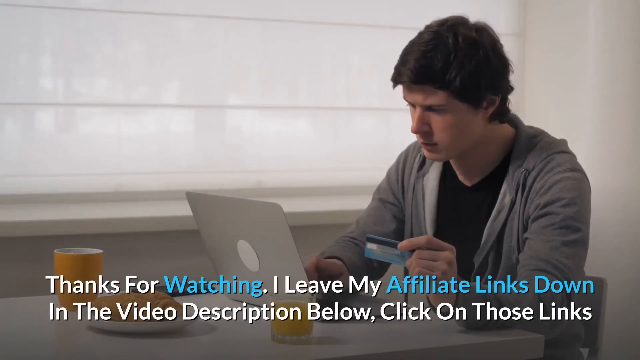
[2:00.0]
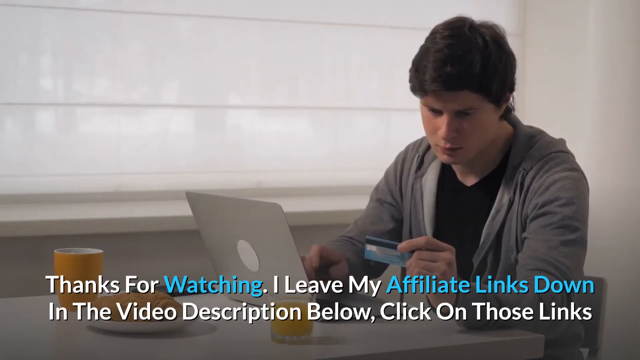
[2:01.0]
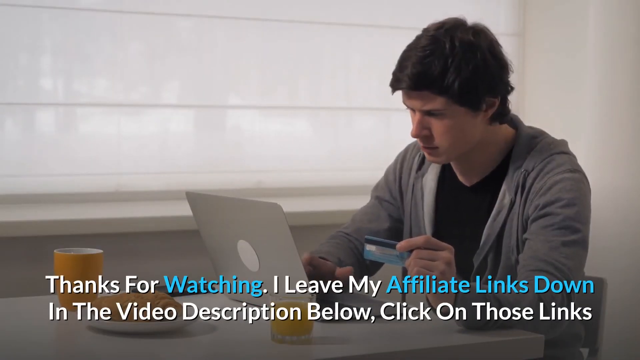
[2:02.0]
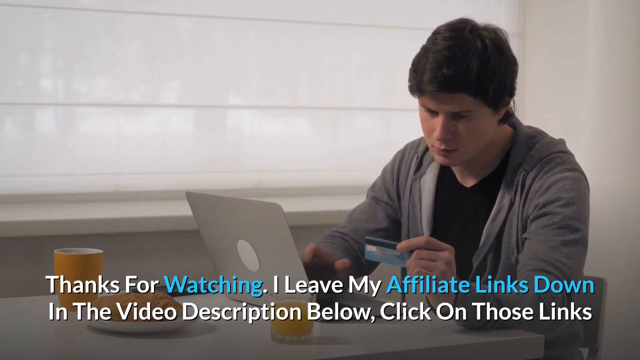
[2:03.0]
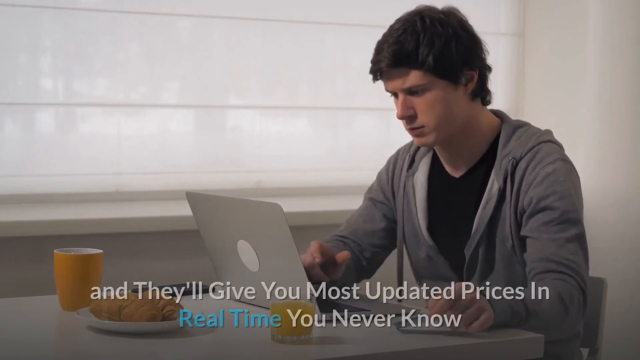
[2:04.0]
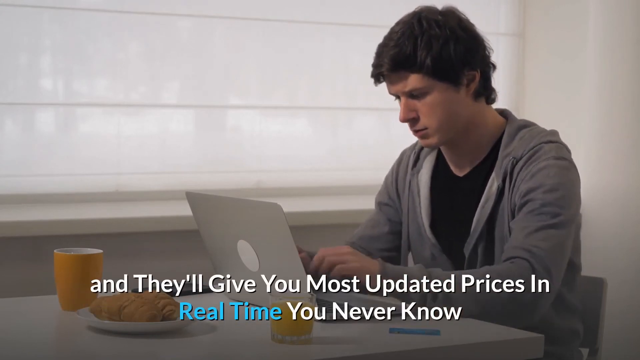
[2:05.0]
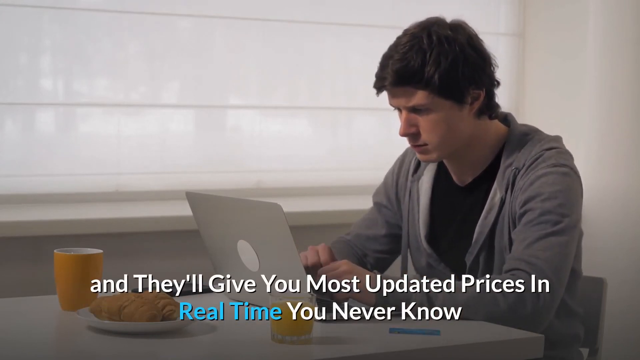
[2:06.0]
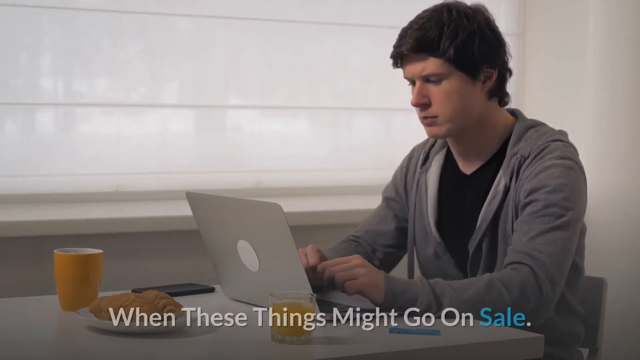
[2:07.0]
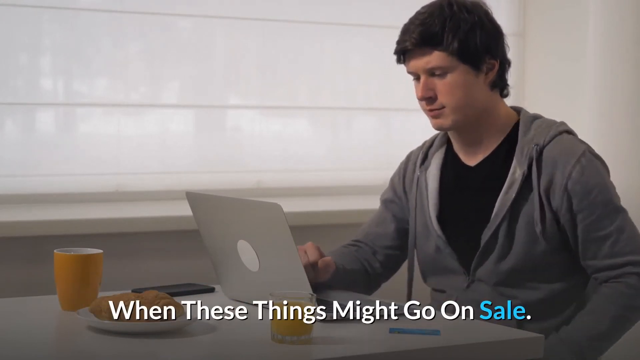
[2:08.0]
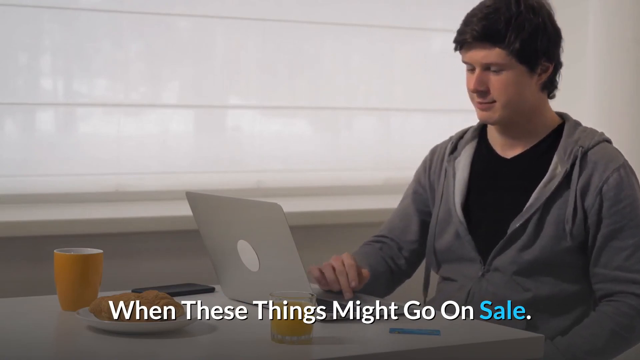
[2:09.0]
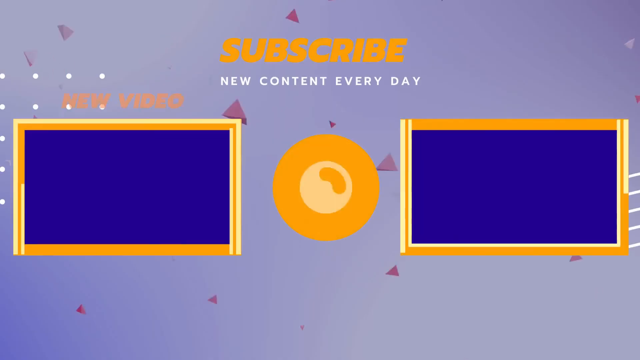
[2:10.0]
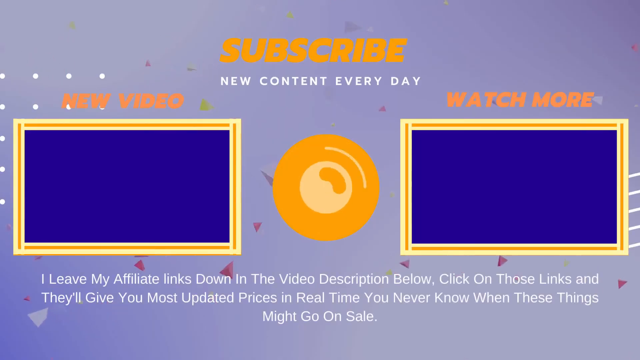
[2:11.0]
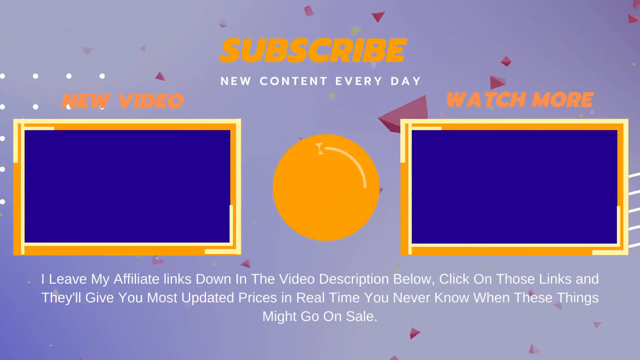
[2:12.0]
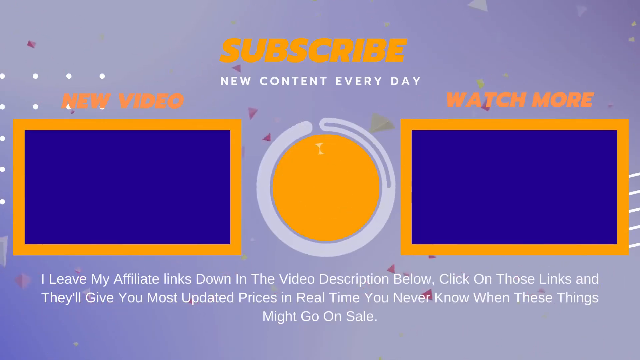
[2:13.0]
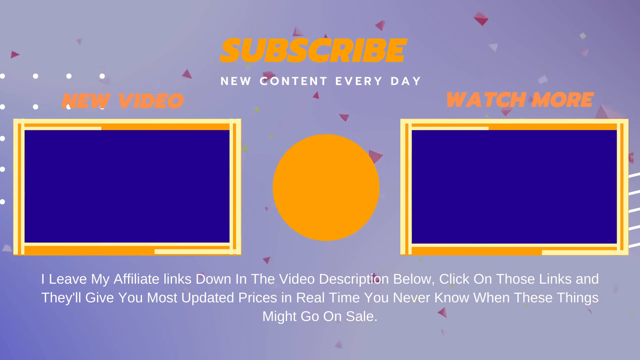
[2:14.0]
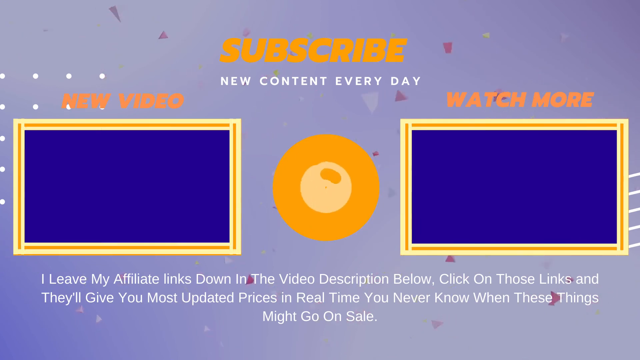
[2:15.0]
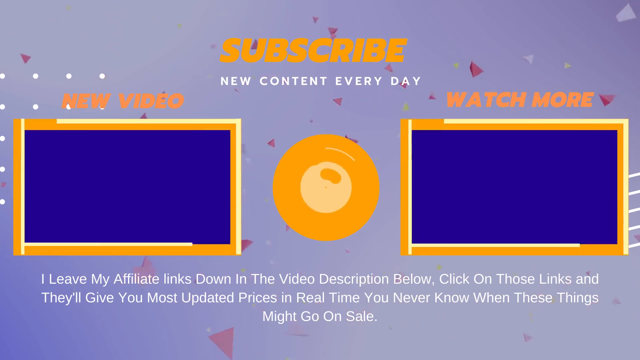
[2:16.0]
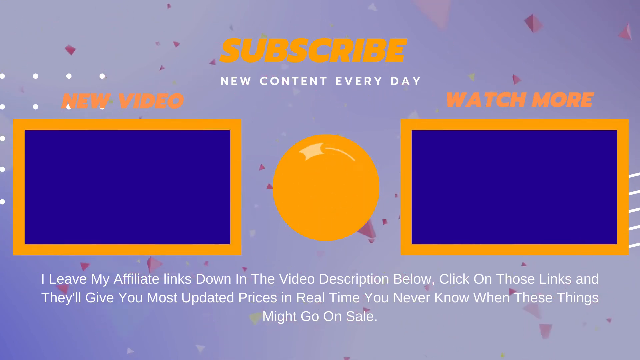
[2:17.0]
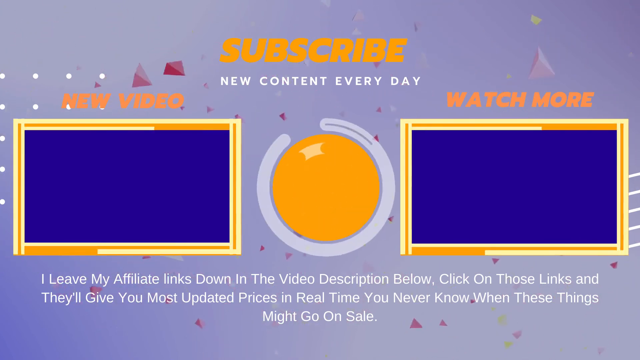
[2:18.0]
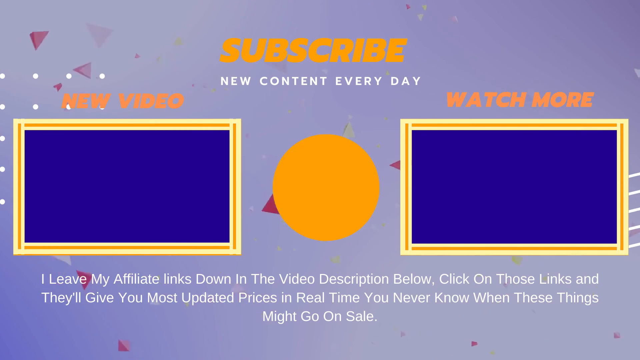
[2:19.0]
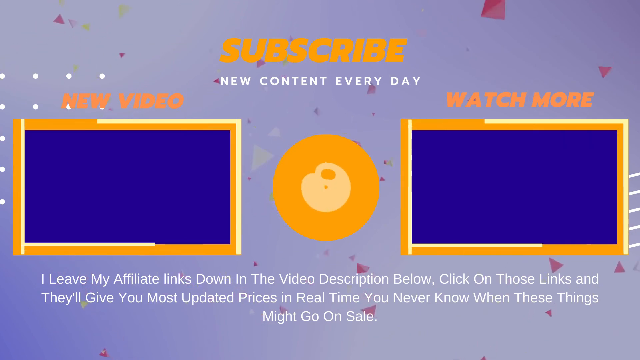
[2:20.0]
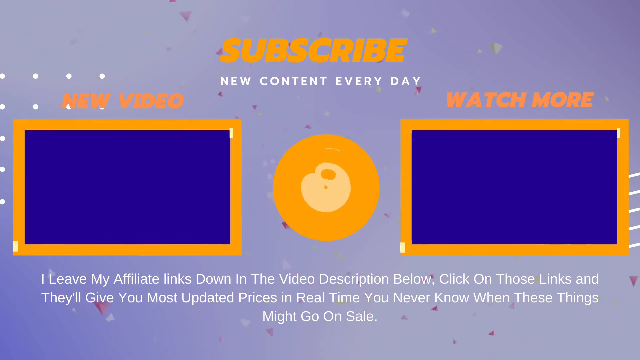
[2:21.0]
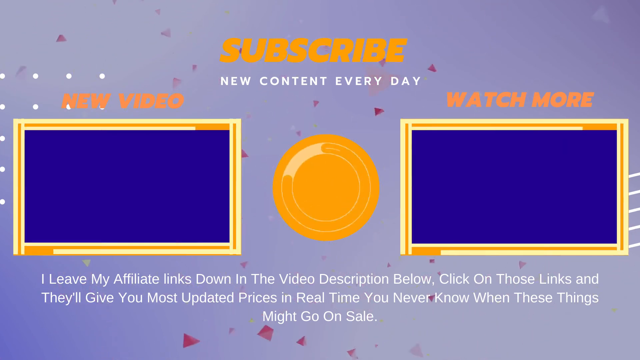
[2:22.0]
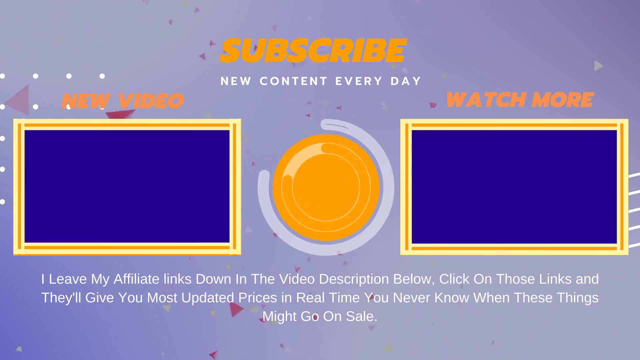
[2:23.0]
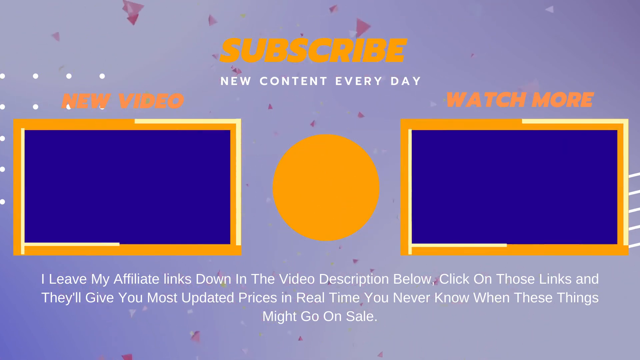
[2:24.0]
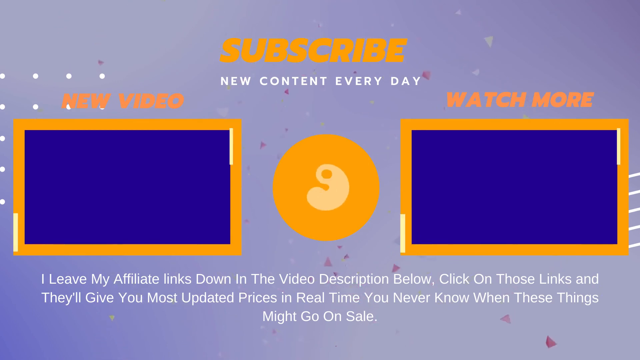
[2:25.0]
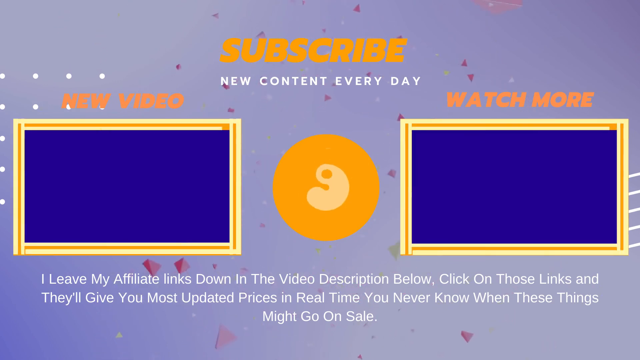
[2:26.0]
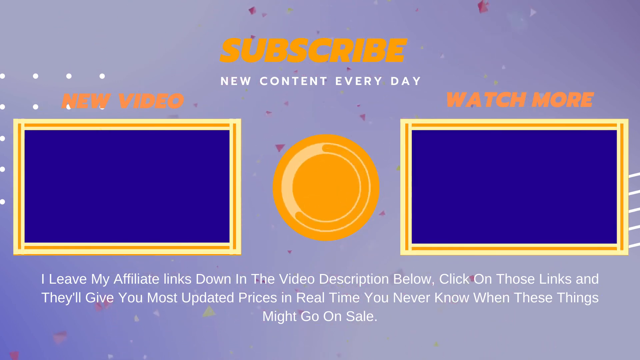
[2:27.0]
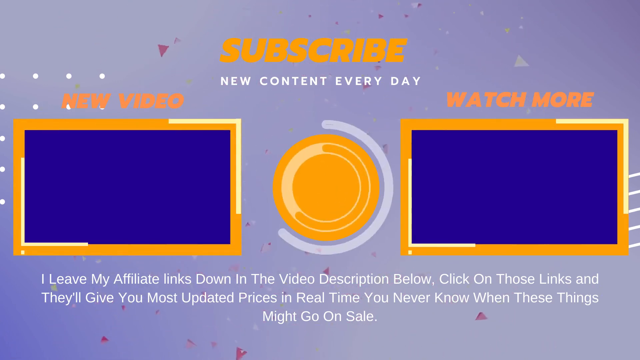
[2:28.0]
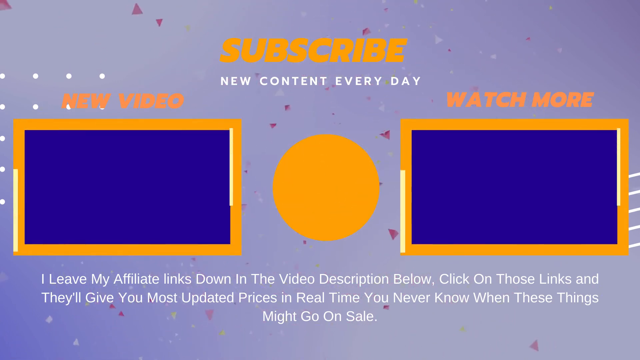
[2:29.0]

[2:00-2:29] A short clip shows a person using a laptop computer while holding a credit card, seemingly typing the card information, maybe to pay for something or check out on a website. In front of the person there appear to be a cell phone, a croissant, a glass of orange juice, and a cup for either tea or coffee. The person looks back at the card and types the numbers into the laptop. Text underneath reads "Thanks for watching. I leave my affiliate links down in the video description below. Click on those links and they'll give you the most updated prices in real time. You never know when these things might go on sale." The video then cuts to an outro showing two links to different videos, with text on top saying "subscribe new content every day" and repeating that the affiliate links are in the description below. The background is a purple scene that looks to have confetti moving around.